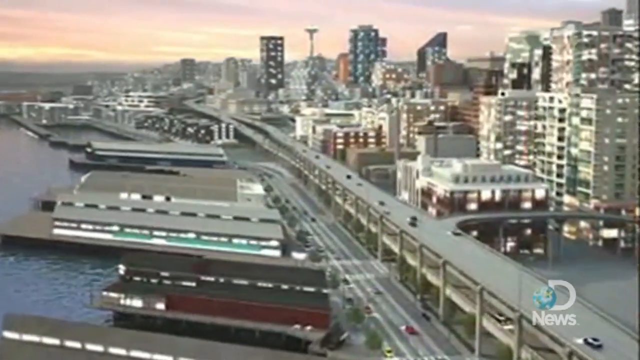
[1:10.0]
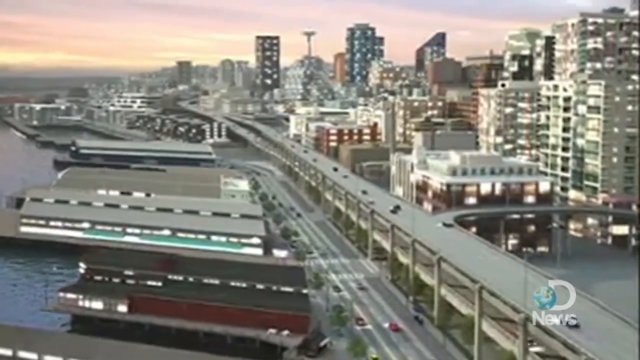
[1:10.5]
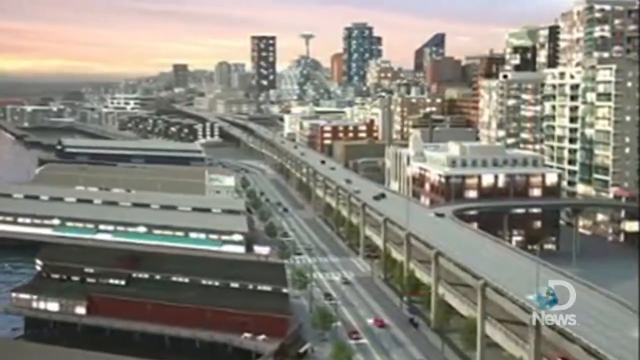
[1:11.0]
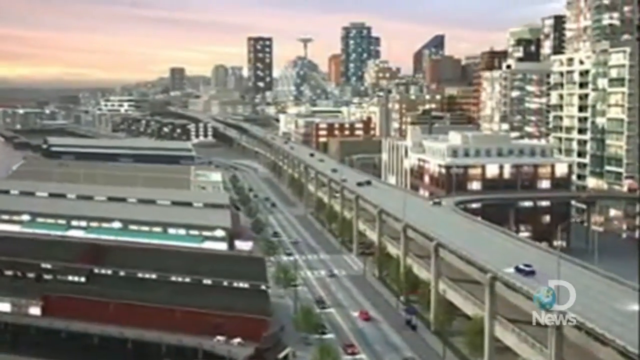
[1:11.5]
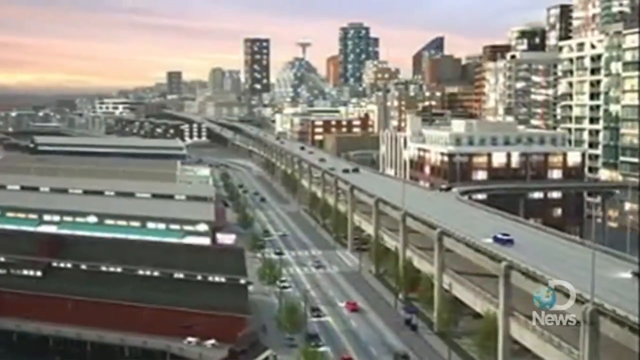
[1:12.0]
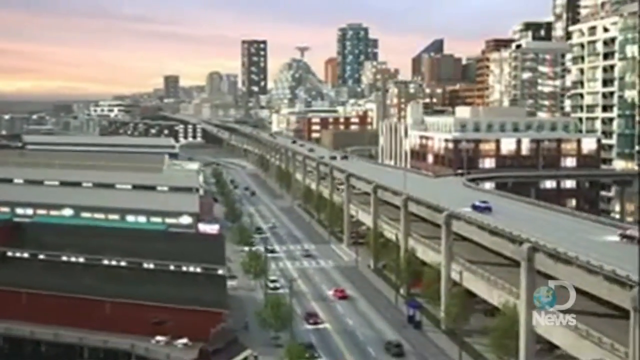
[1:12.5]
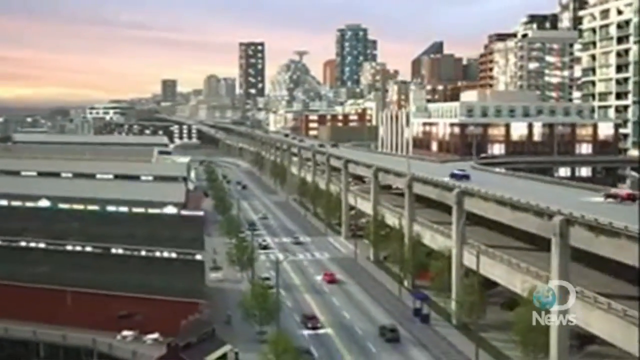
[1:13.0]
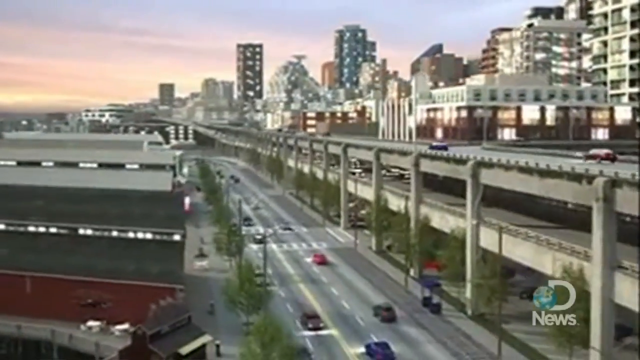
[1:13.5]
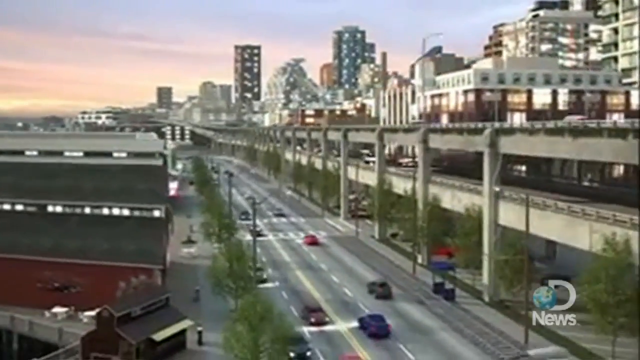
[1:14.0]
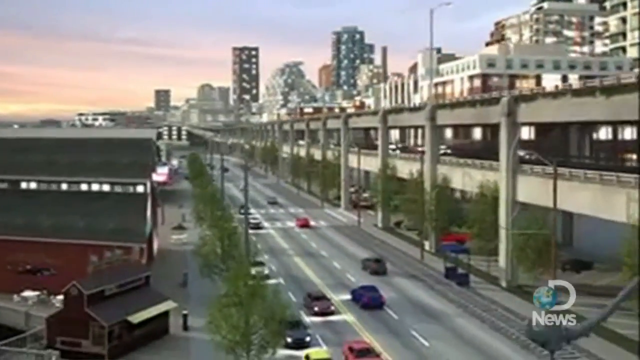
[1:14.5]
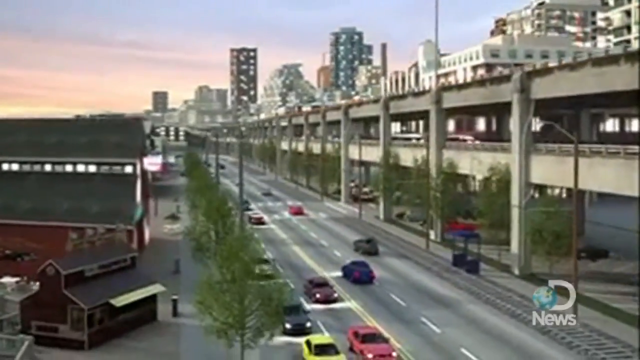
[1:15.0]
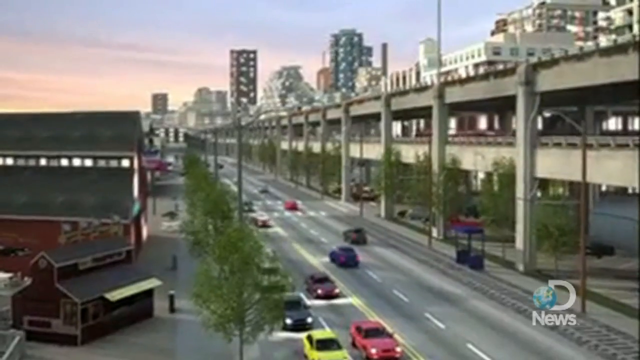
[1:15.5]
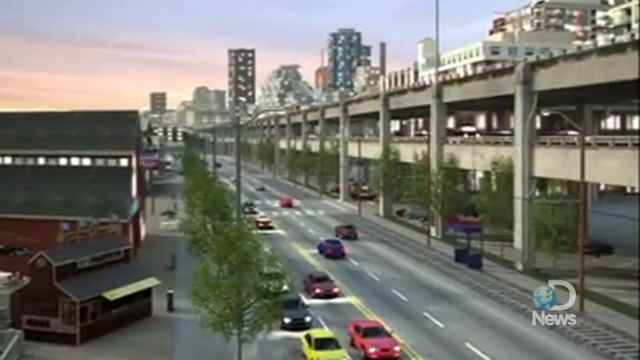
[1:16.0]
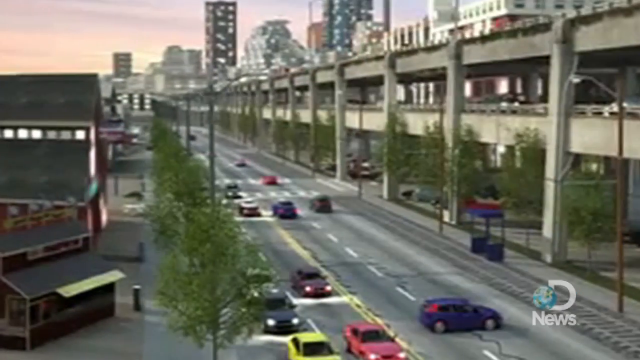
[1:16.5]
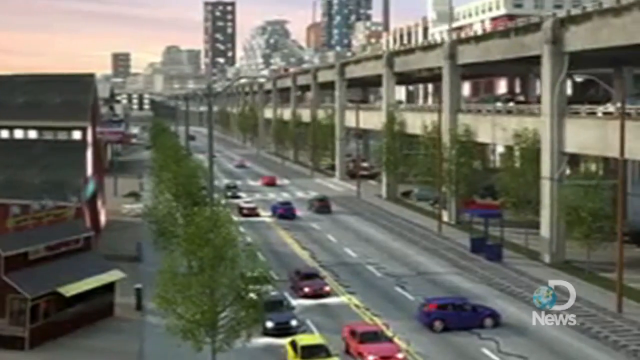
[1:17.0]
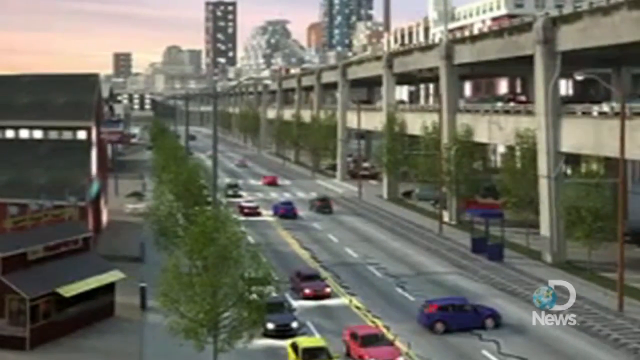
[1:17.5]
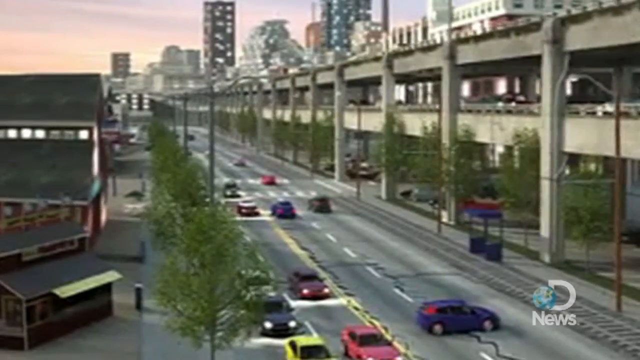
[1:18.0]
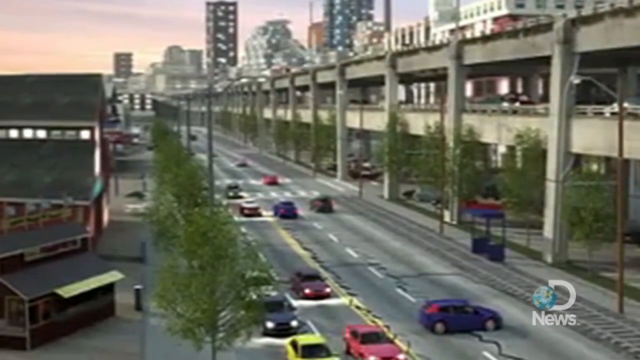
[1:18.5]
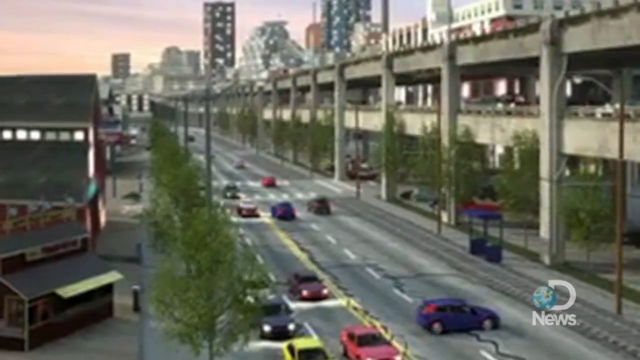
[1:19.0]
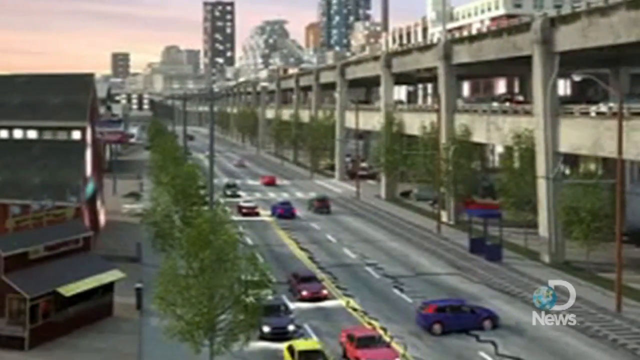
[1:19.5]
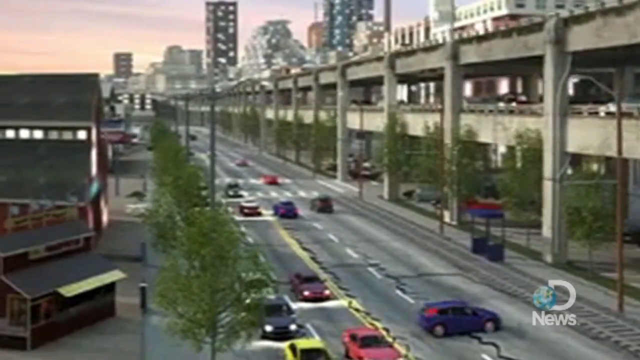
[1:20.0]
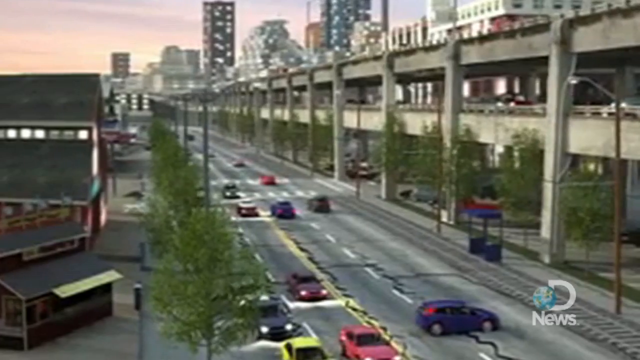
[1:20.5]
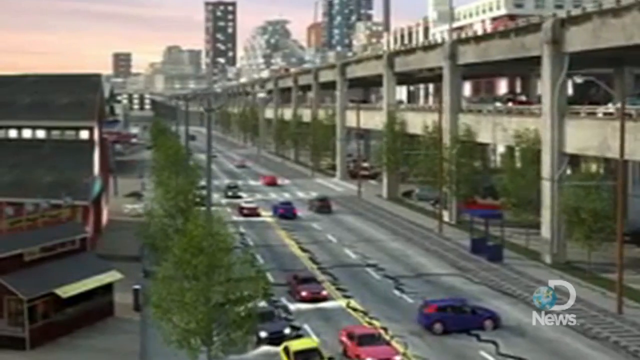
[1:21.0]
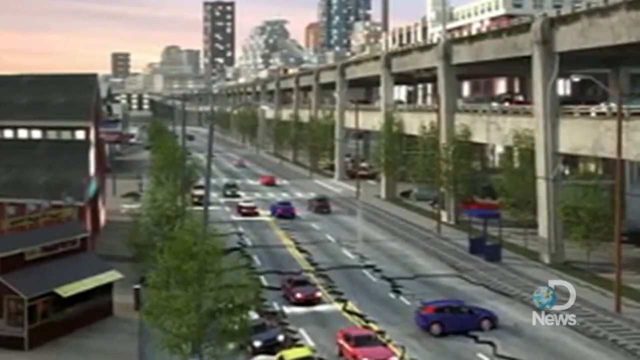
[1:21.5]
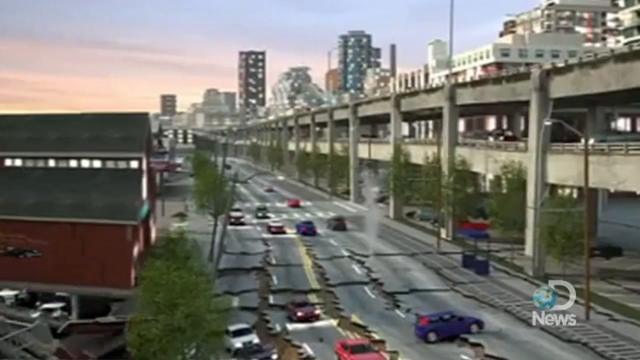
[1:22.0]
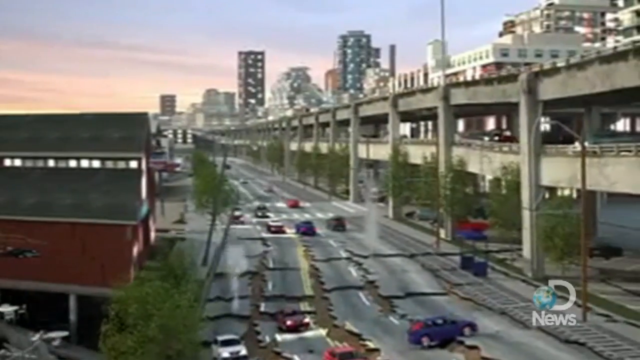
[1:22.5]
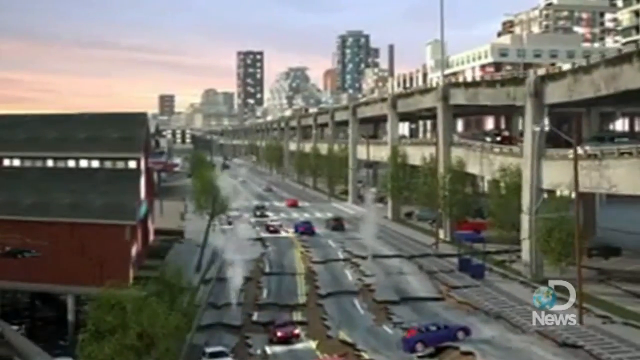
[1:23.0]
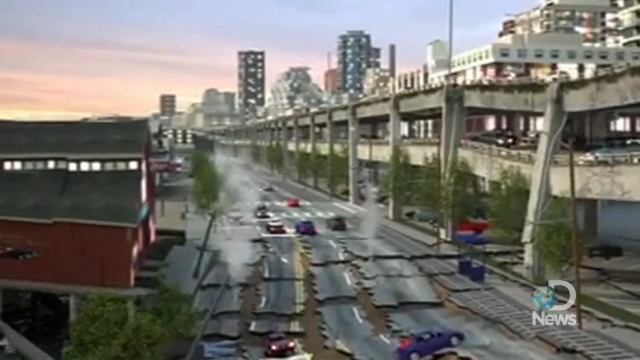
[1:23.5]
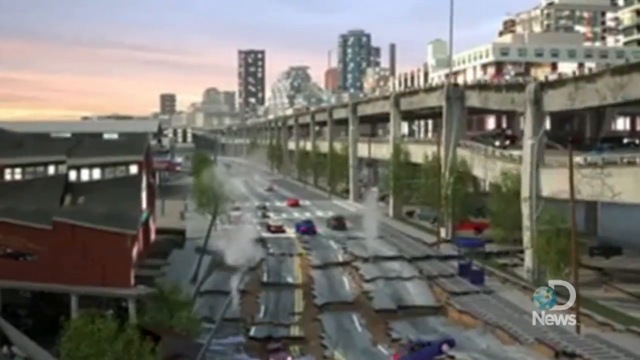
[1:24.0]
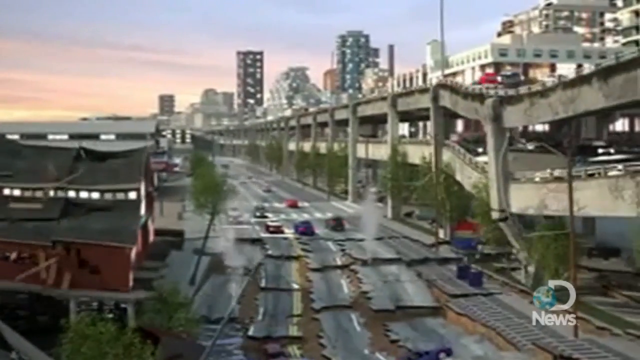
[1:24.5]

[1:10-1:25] A computer-generated model shows a double-decker highway, with one layer on top and one below it, and another highway even below that, and what would possibly occur if the megaquake took place there. The highways, especially the double-decker highway, sway back and forth until they buckle and give way. The highway down below has two lanes on each side, with a railroad track or some type of transportation track along the right side, and there are a lot of cars on all of these roads. On the road below the double-decker road, the asphalt breaks, crumbles and collapses with the cars on it. Businesses to the left of the highway buckle in the middle and fall.